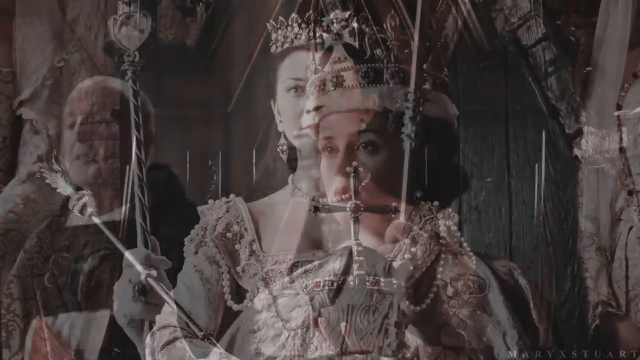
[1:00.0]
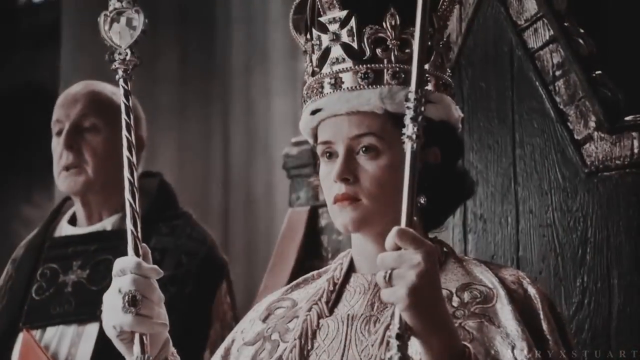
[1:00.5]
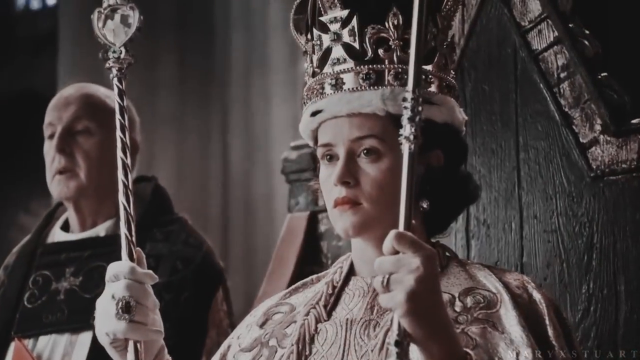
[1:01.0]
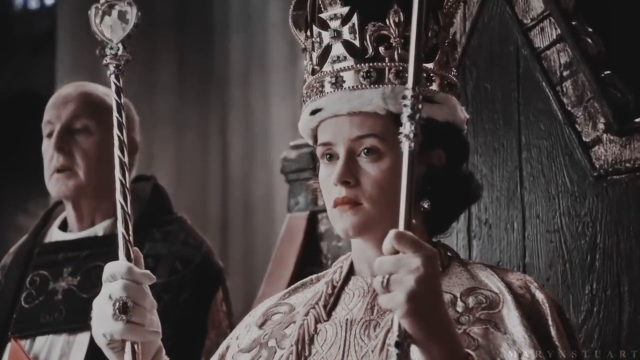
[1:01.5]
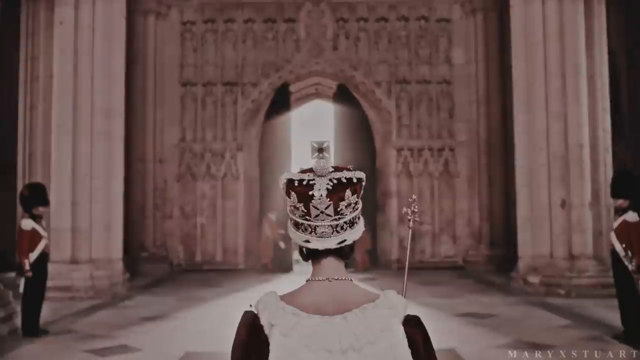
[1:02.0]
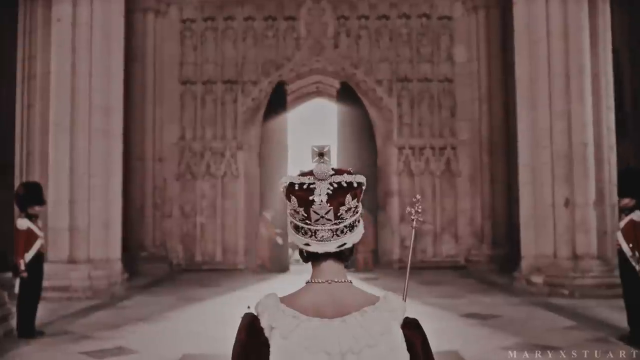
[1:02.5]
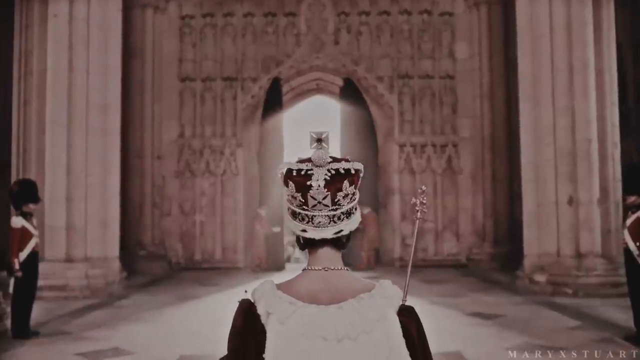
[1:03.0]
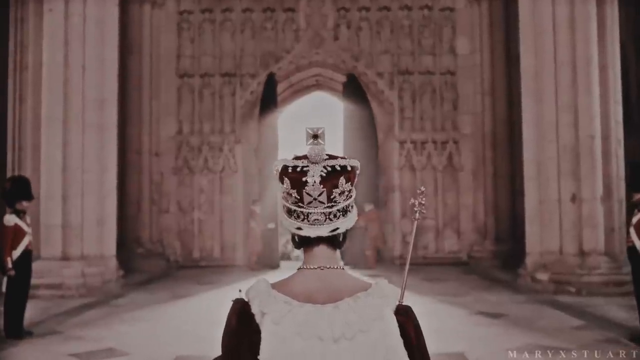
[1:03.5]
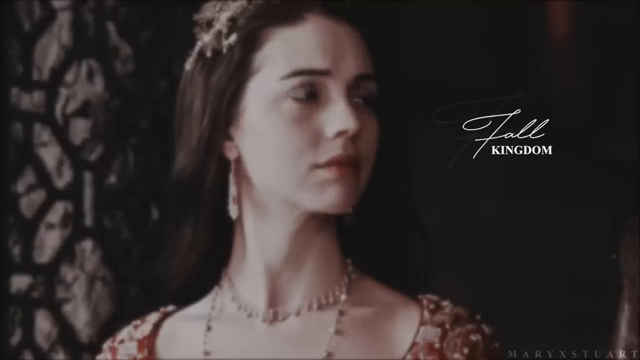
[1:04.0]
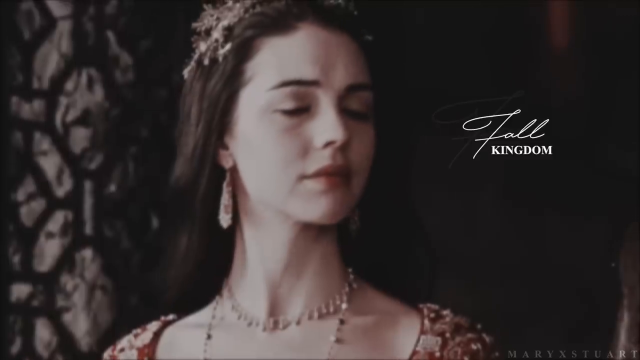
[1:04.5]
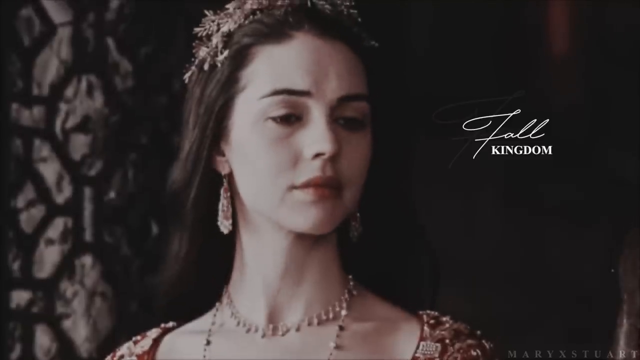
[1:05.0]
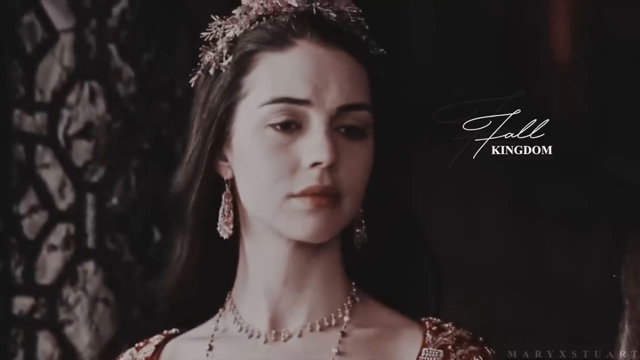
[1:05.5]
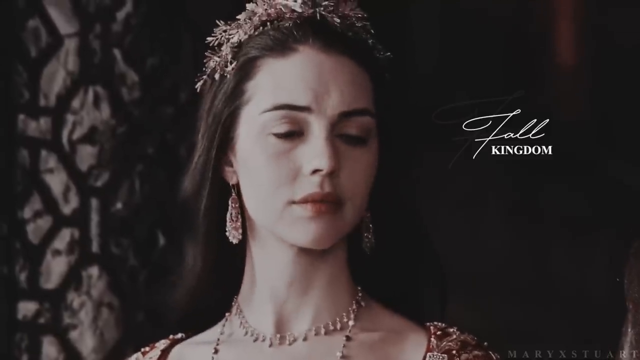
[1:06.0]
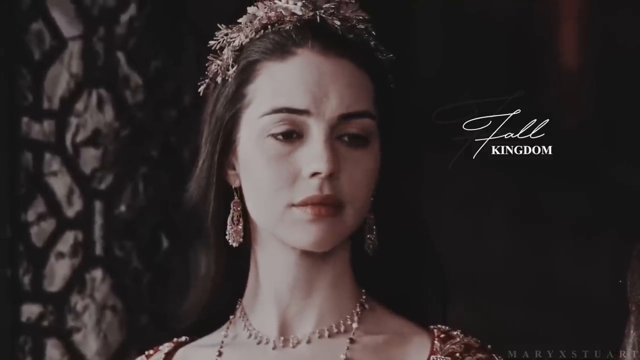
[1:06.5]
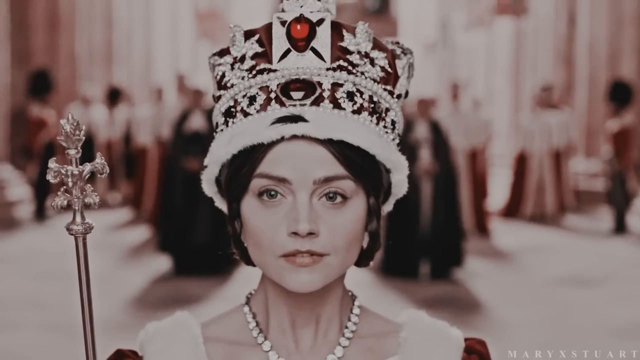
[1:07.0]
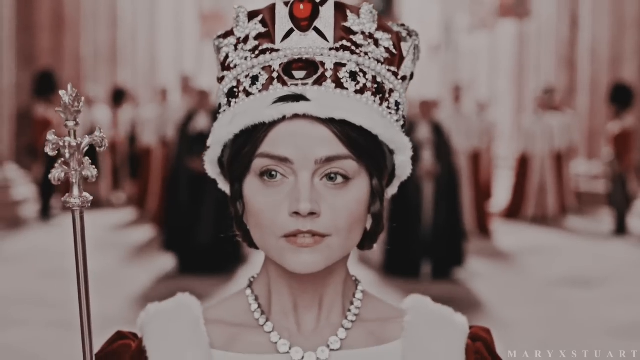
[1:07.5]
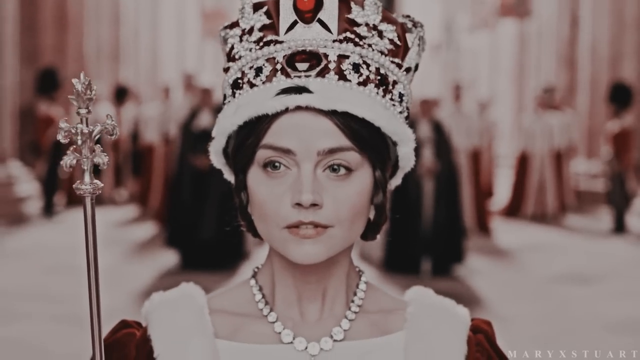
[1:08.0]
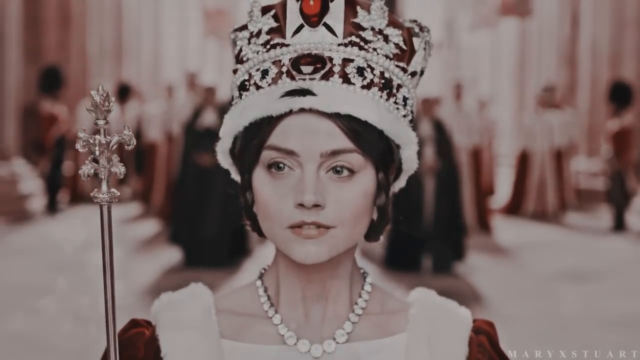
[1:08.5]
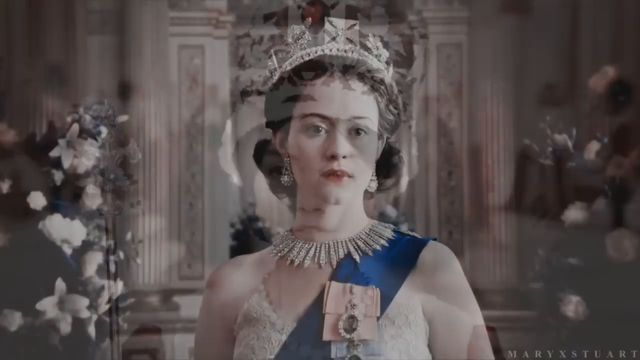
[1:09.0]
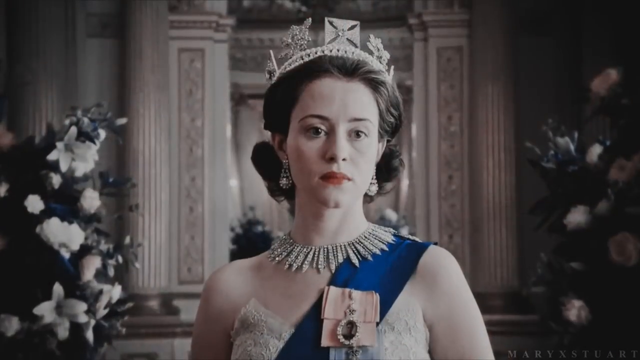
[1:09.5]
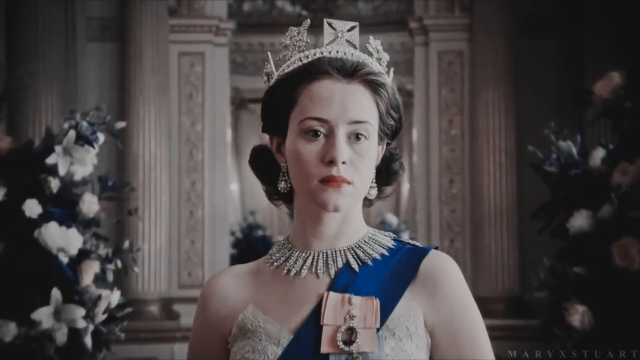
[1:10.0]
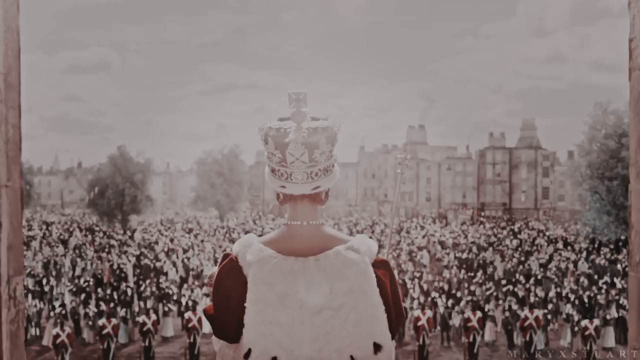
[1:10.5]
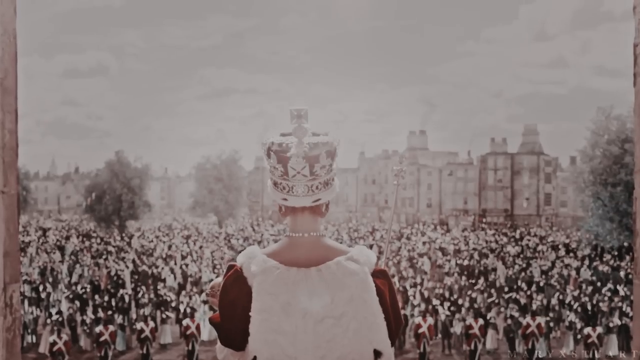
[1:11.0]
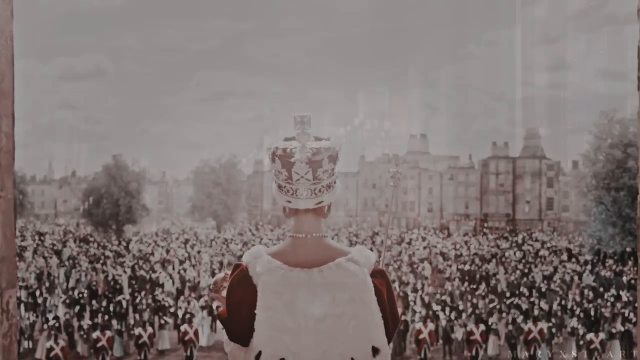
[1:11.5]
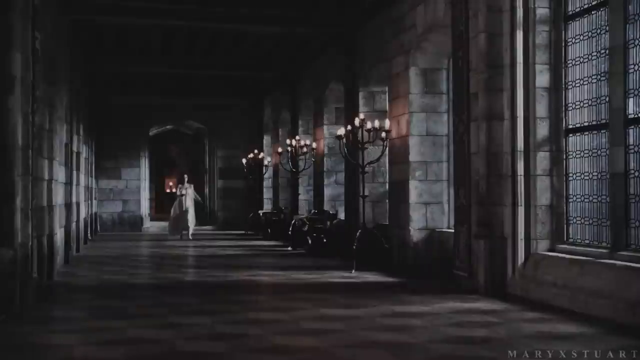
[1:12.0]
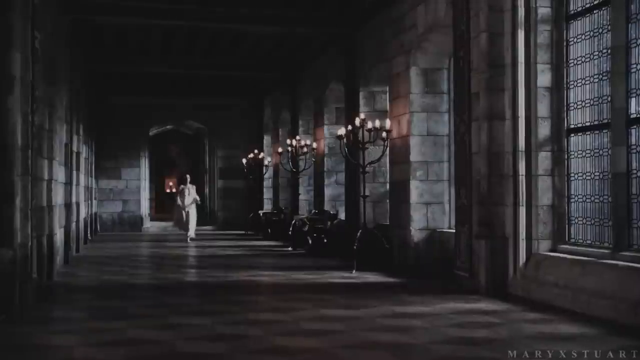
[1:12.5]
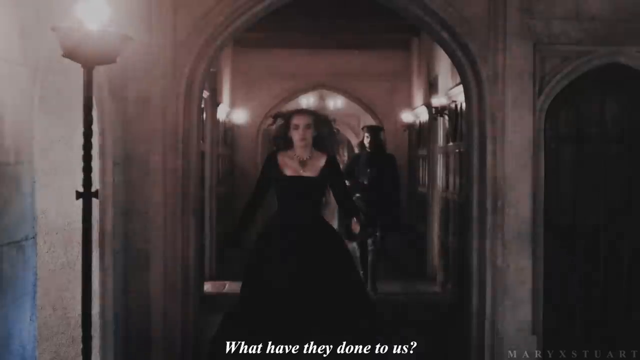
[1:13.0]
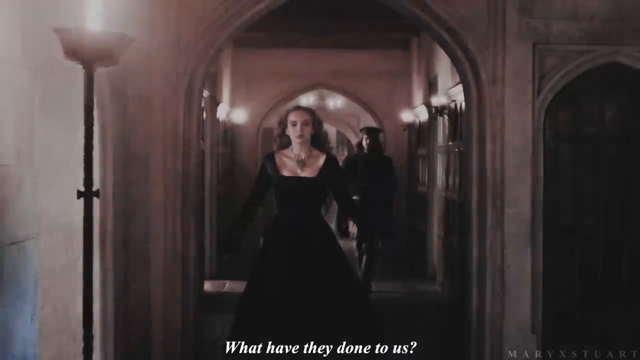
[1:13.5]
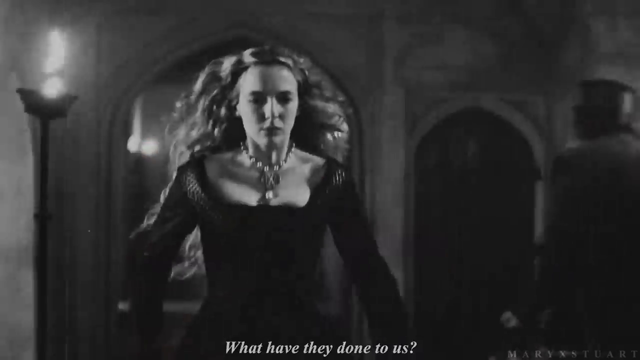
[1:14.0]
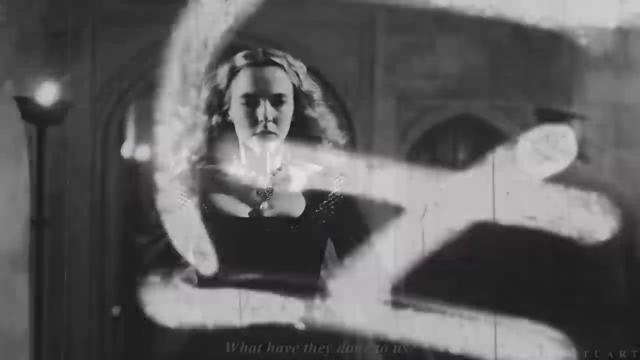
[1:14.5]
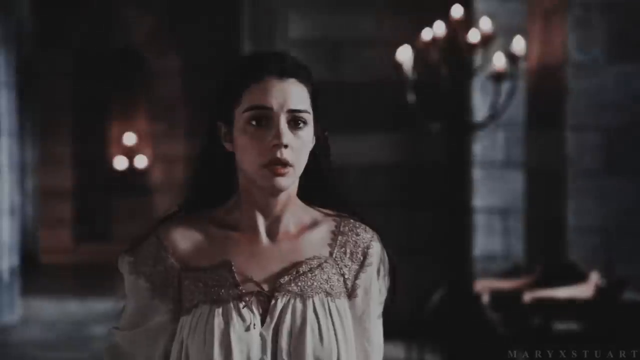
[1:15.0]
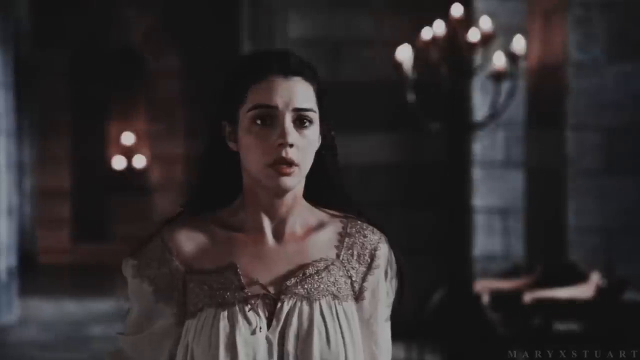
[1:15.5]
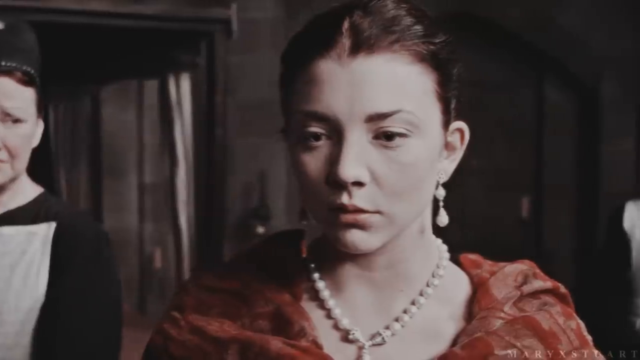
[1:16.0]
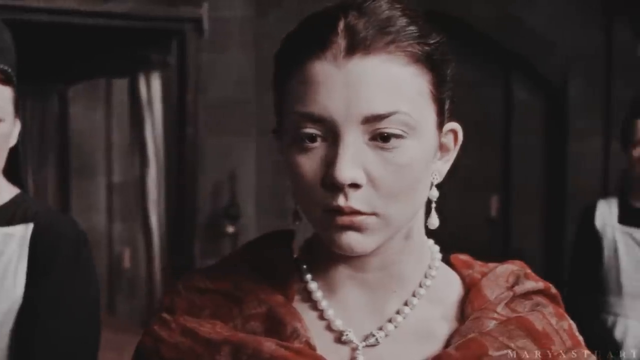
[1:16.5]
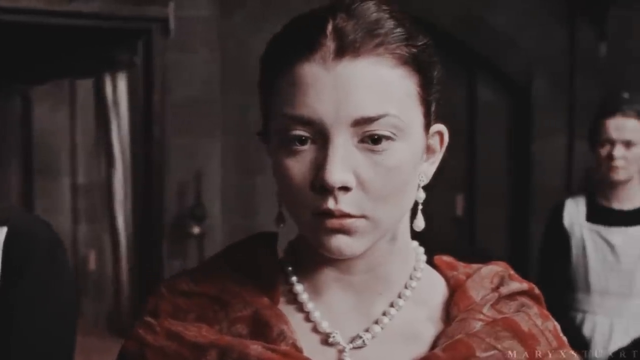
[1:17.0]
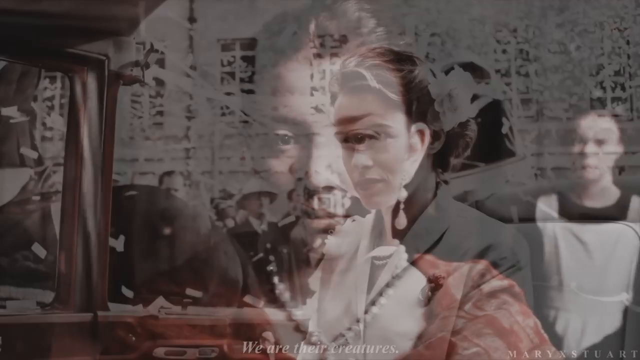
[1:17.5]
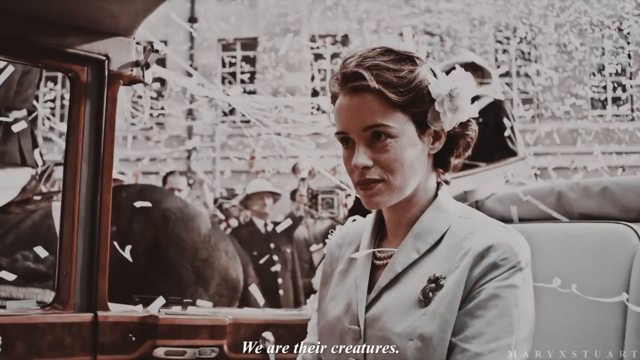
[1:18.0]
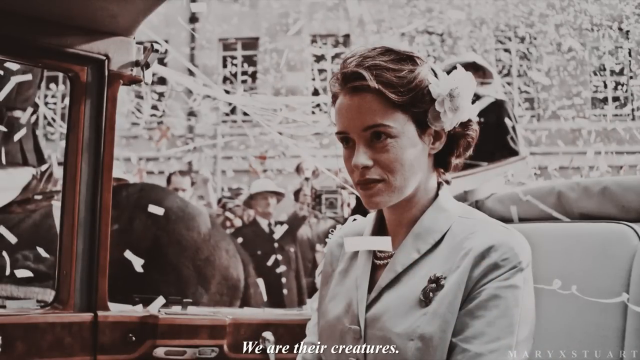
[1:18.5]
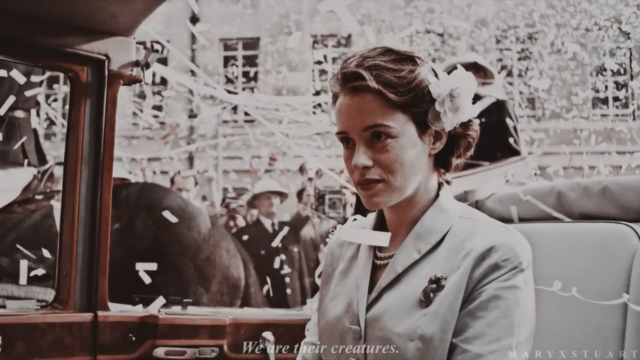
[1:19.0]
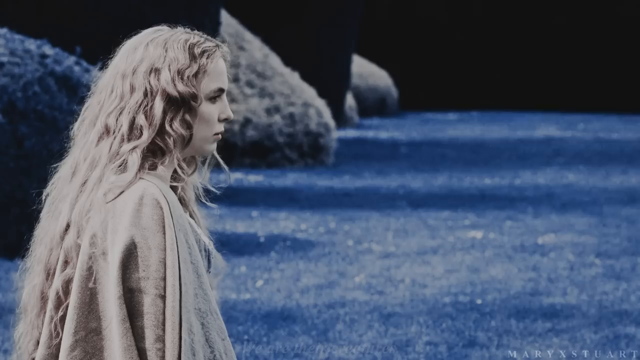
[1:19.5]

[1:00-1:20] A woman on the right side of the wide-format frame looks like she is sitting in a throne; she is seen only from the shoulders up. The chair is made of wooden vertical boards, seems to be outlined around the perimeter with kind of a gold look, and spikes up in the middle. She wears a big, tall crown, higher than her entire head, with a cross on the front and a lot of gold. She holds what looks to be a golden scepter in her left hand and wears a ring on that finger. She looks very serious, looking forward. Her brown hair comes down to her neck, and she is white. She looks toward somewhere around seven o'clock. To her right is a person dressed like a member of the clergy, in a kind of brown robe with a decorative gold pattern on the front; he looks very old. She also has a gold scepter in her right hand. She is then seen walking toward a big open door at the back of what looks like a castle.